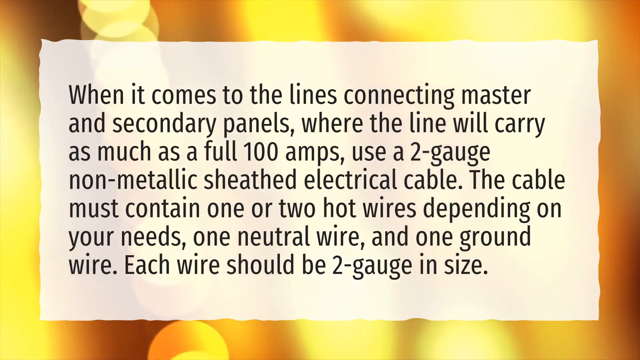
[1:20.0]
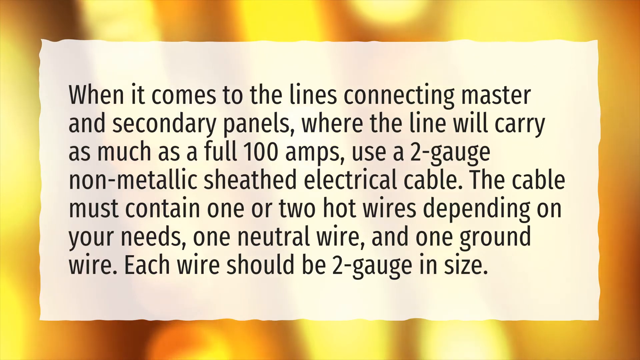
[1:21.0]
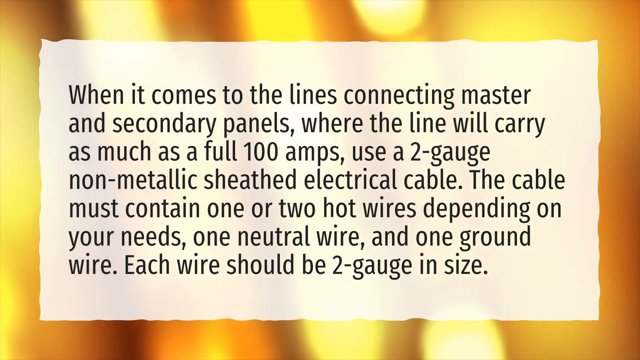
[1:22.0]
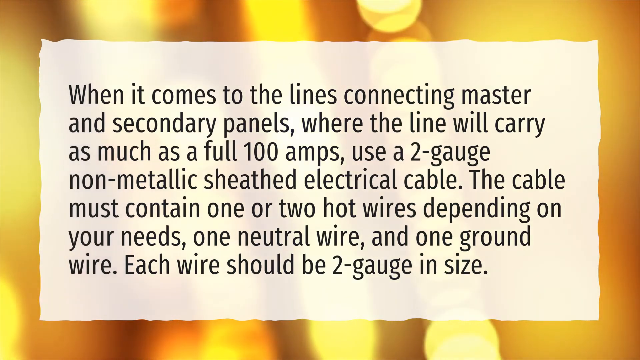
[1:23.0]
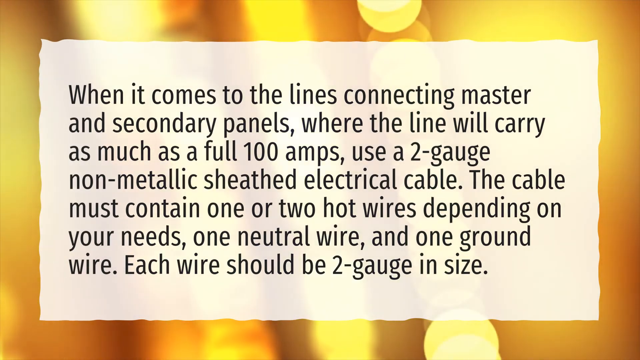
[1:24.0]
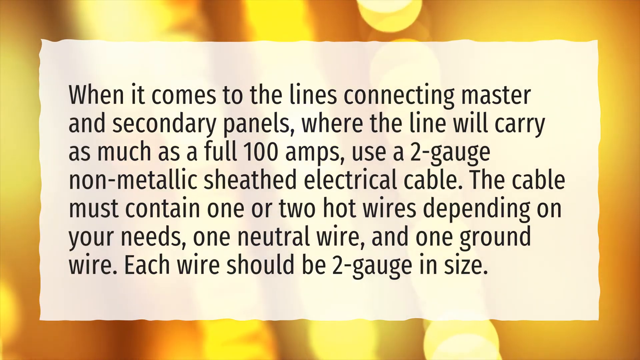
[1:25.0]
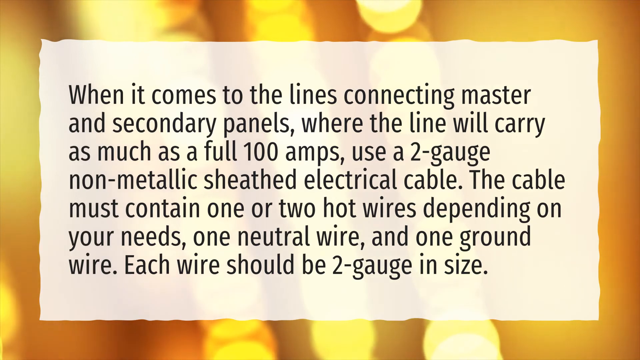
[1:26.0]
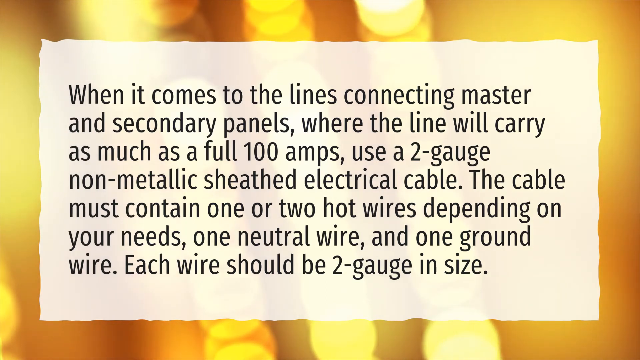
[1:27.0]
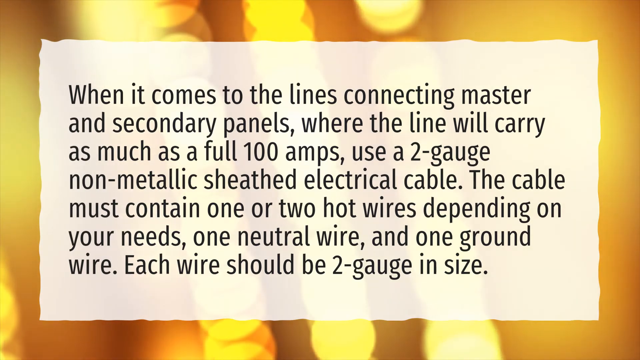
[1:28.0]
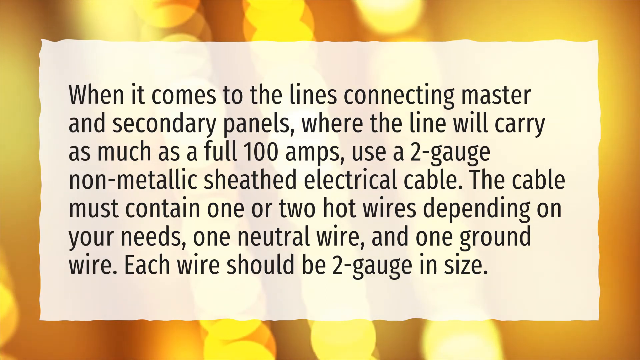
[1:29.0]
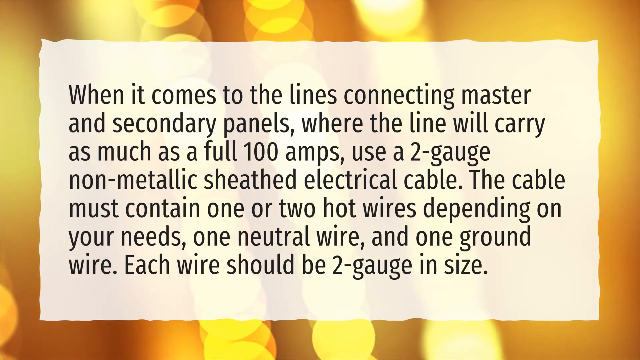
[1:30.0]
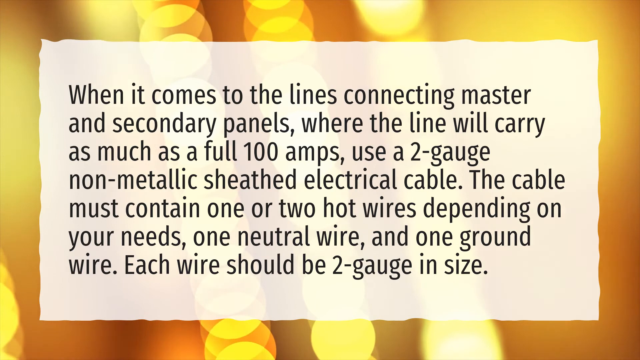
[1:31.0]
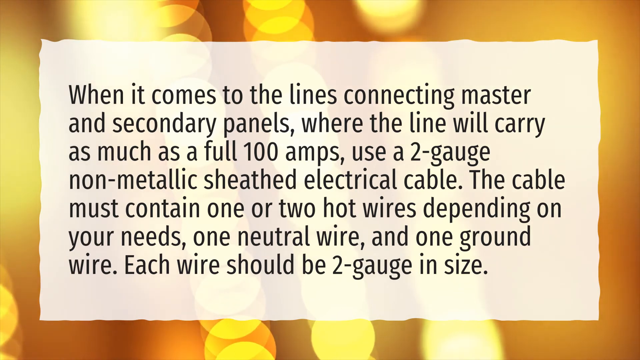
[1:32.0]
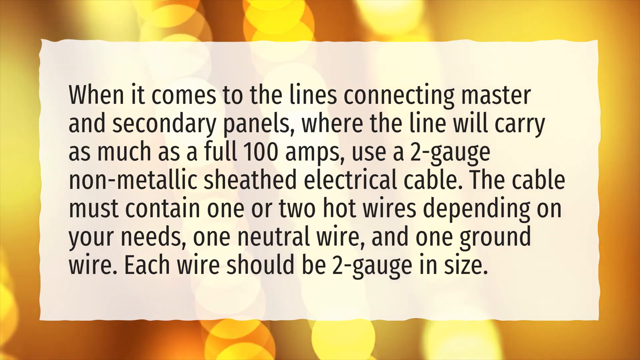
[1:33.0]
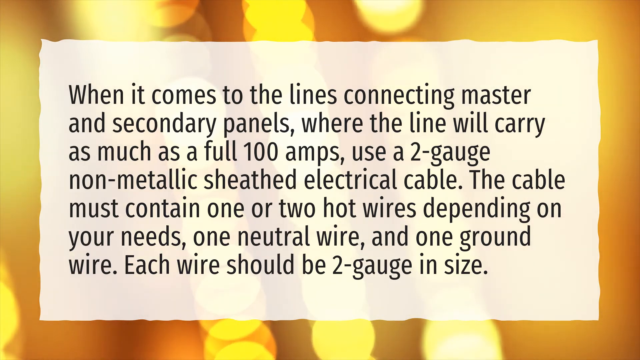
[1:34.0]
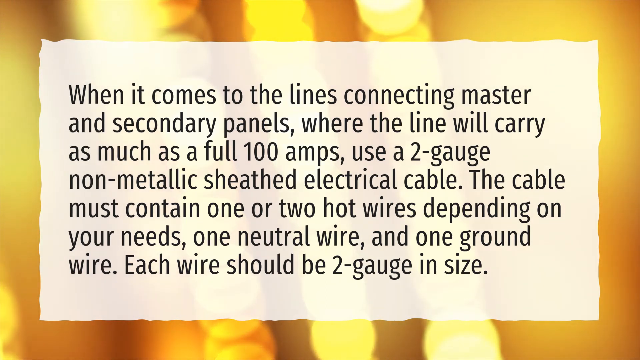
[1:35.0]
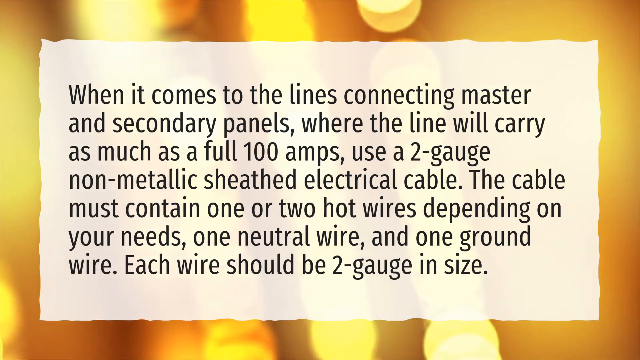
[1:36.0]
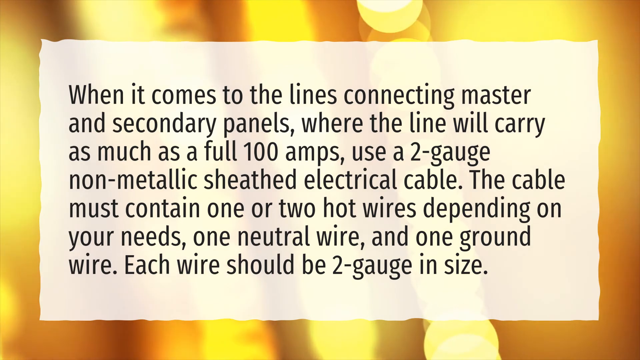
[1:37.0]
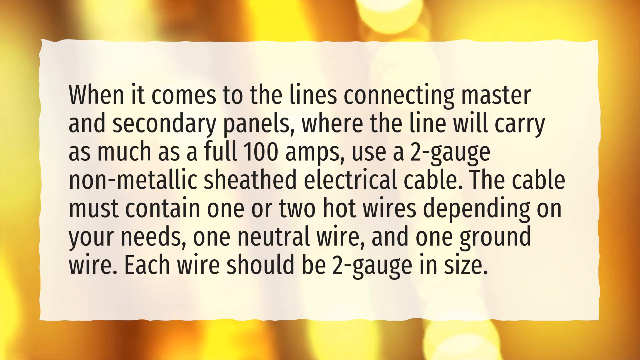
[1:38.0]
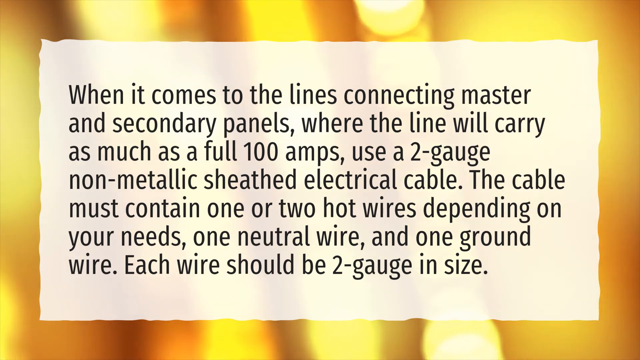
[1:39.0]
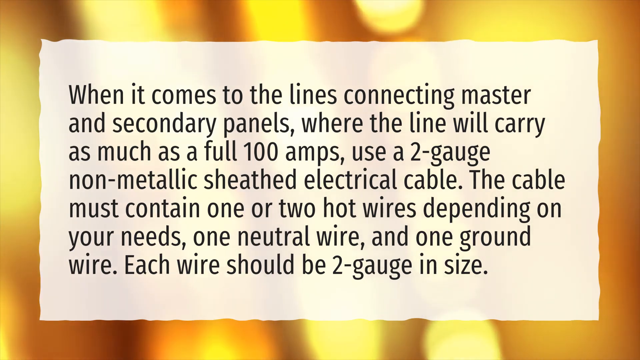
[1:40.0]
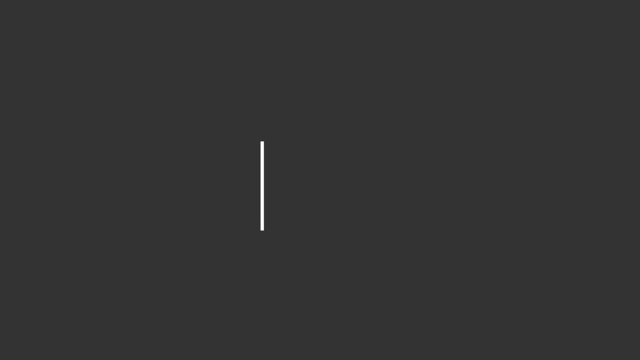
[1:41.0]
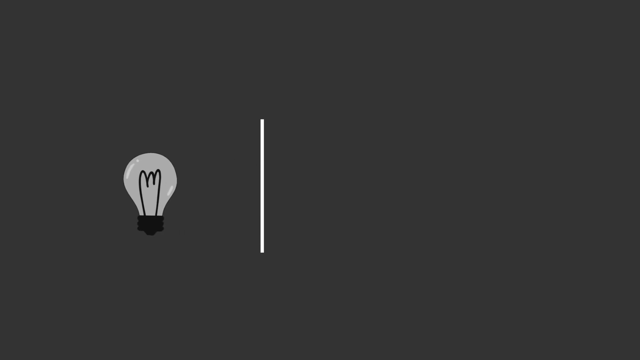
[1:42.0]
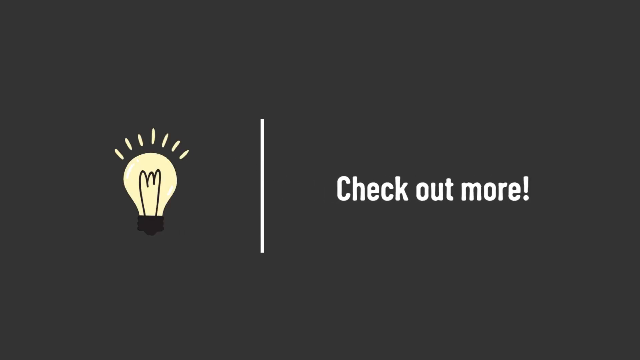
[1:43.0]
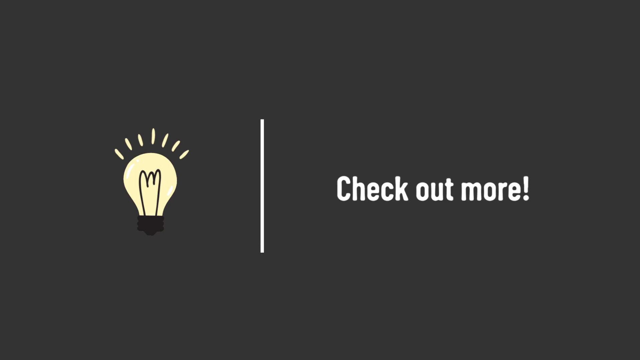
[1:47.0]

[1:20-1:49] A sort of transparent white rectangle fills the middle of the screen, taking up the majority of it, with question-and-answer formatting. The text reads: "when it comes to the lines connecting master and secondary panels, where the line will carry as much as a full 100 amps, use a 2-gauge non-metallic sheet electric cable. The cable must contain one or two hot wires, depending on your needs, one neutral wire, and one ground wire. Each wire should be 2-gauge in size." This holds on the page while sort of yellowish-orange lights pulsate in the background. The scene changes one final time: a little drawing of a light bulb goes from off to on, with little lines at its top to show a glow. On the right side, white text reads "check out more", and a line then appears between the light bulb and the "check out more" text.